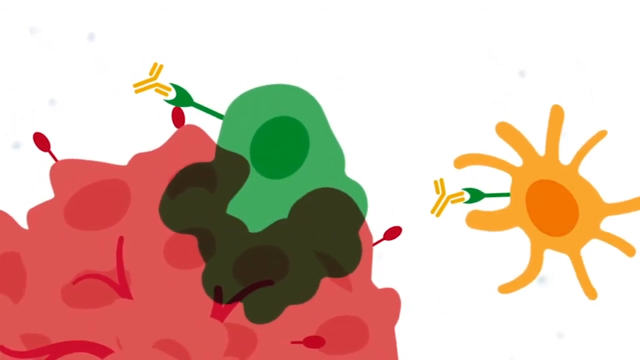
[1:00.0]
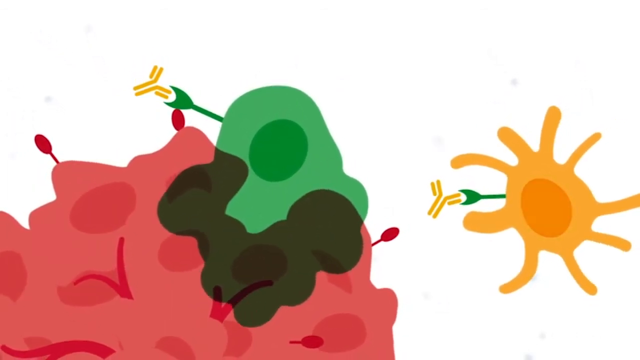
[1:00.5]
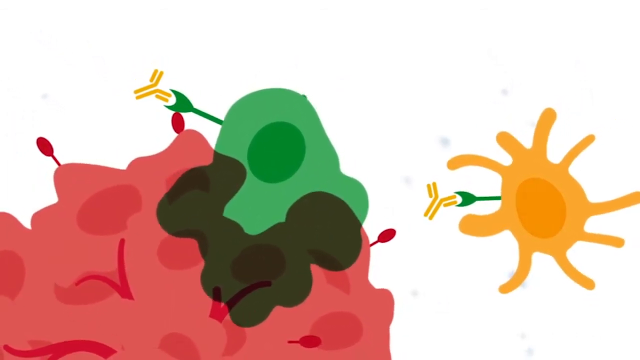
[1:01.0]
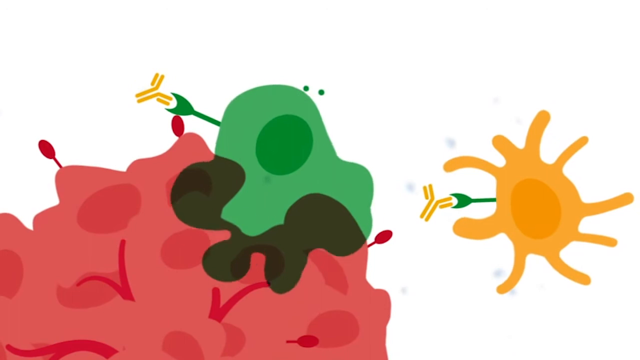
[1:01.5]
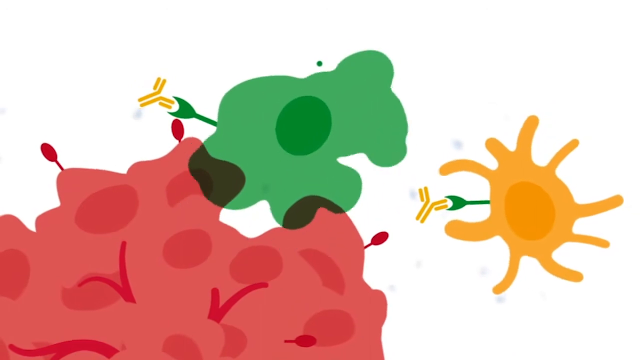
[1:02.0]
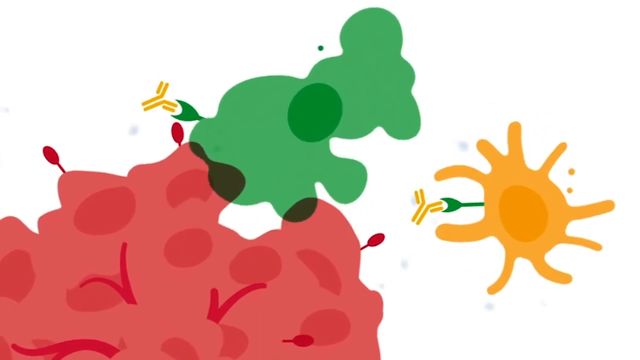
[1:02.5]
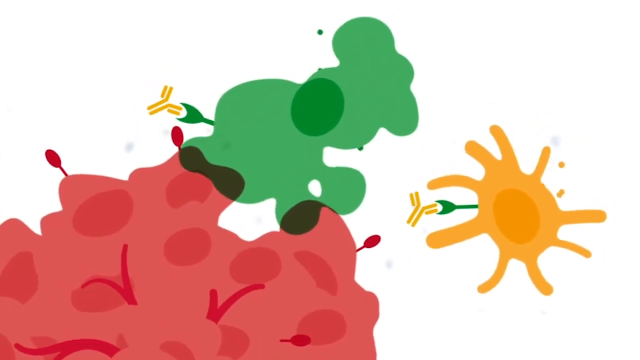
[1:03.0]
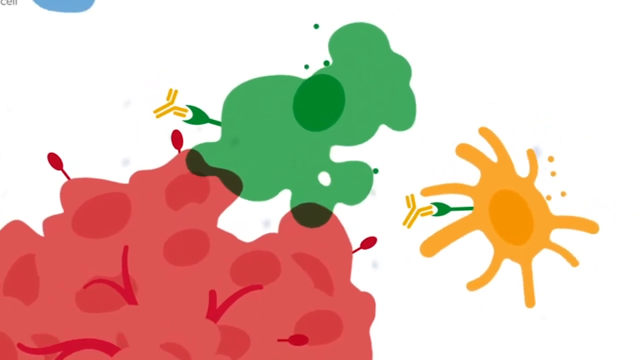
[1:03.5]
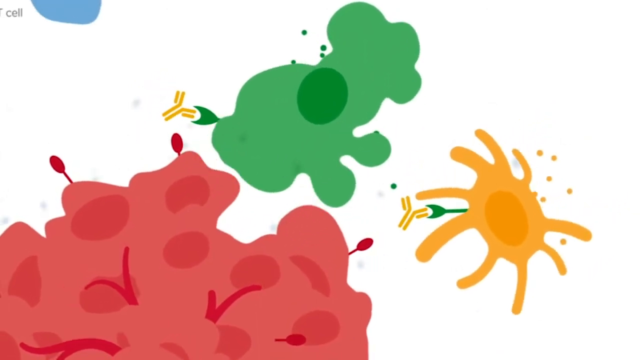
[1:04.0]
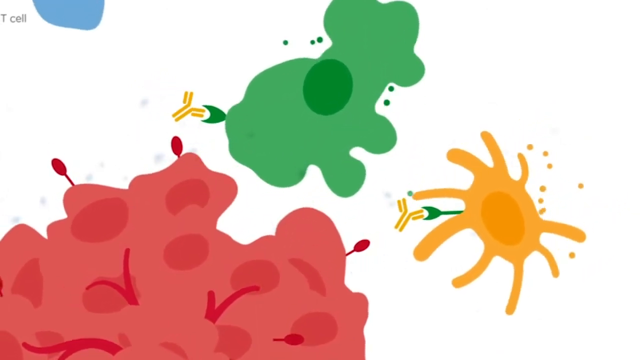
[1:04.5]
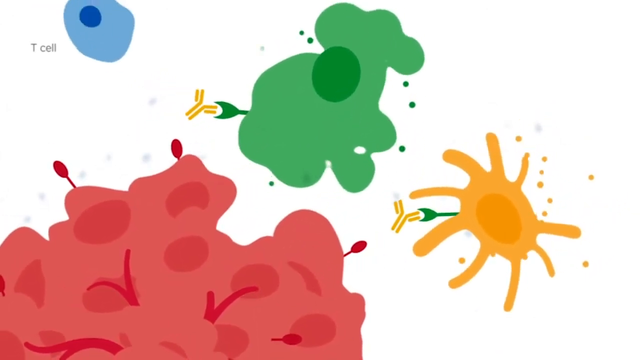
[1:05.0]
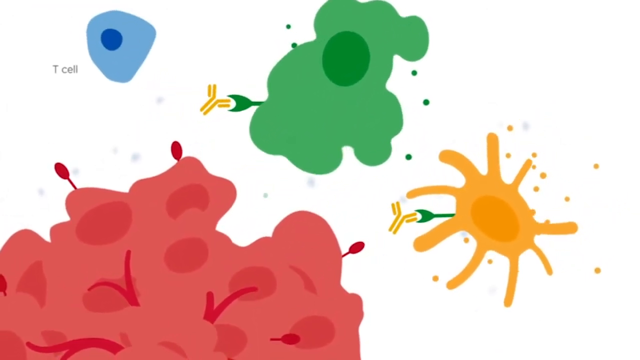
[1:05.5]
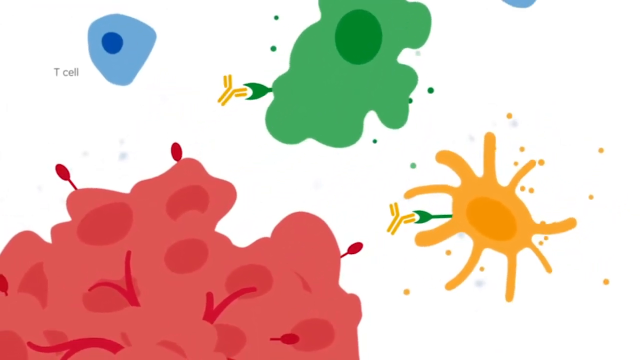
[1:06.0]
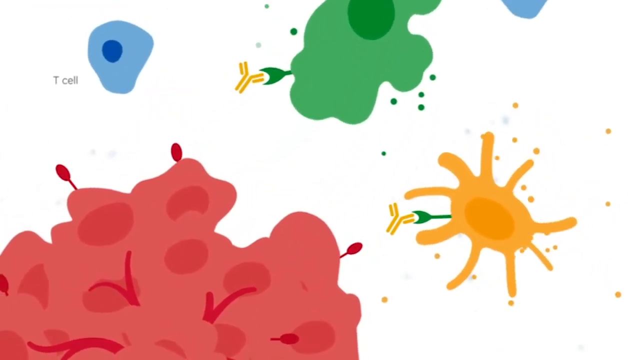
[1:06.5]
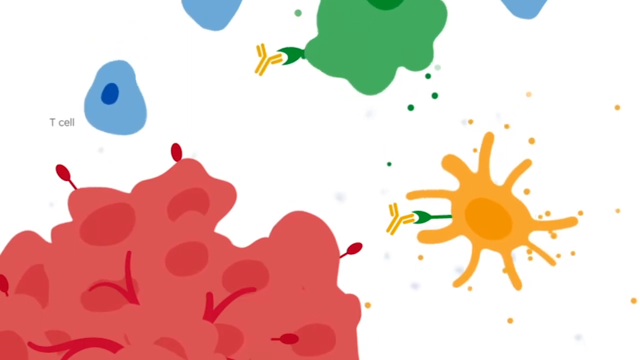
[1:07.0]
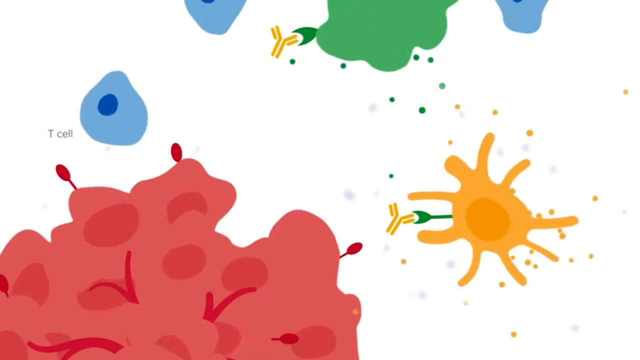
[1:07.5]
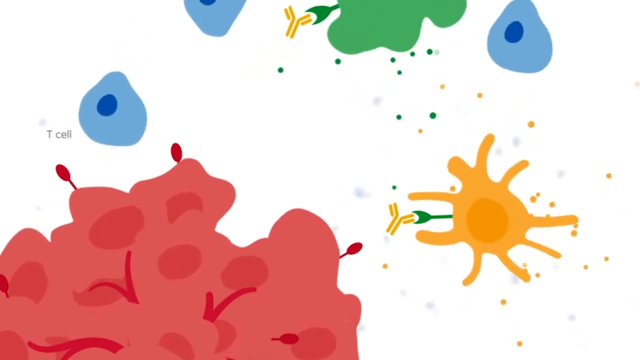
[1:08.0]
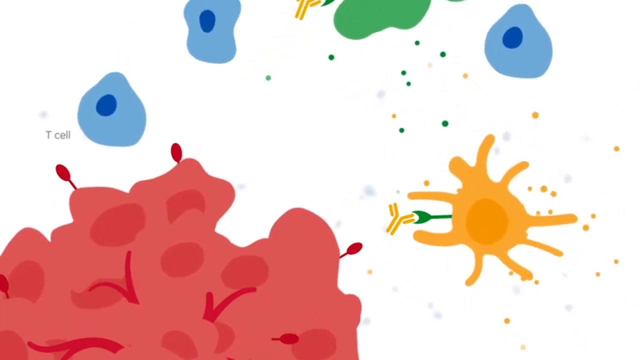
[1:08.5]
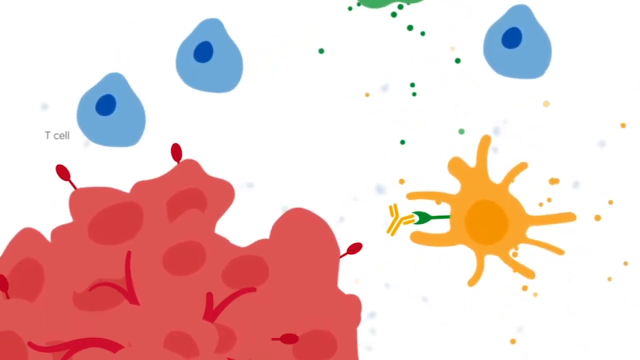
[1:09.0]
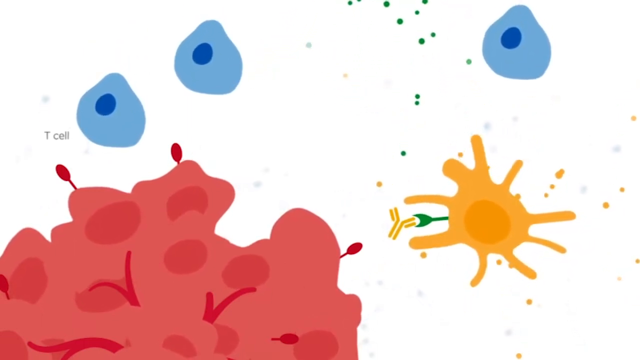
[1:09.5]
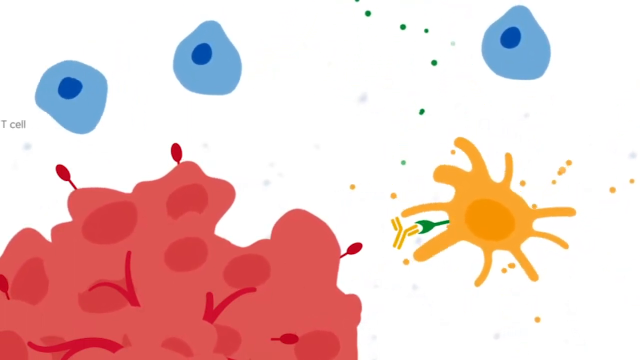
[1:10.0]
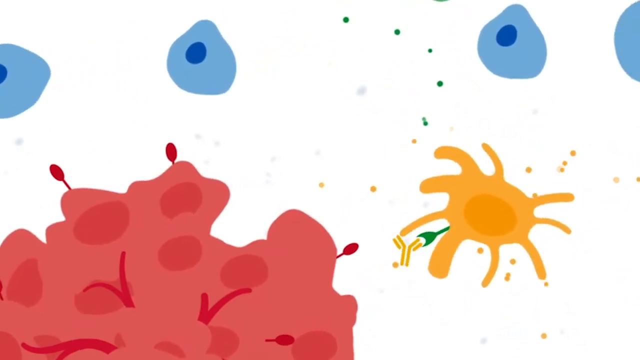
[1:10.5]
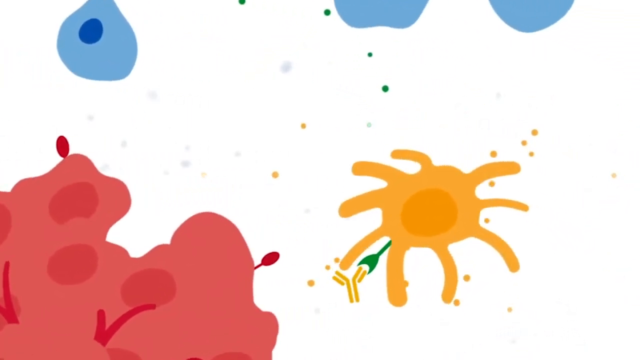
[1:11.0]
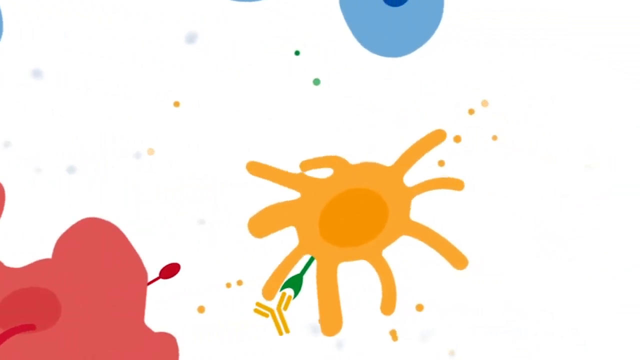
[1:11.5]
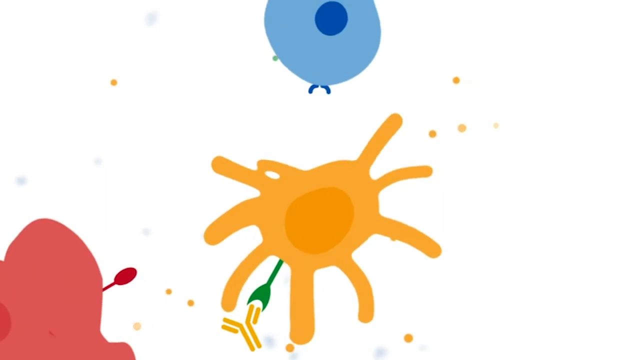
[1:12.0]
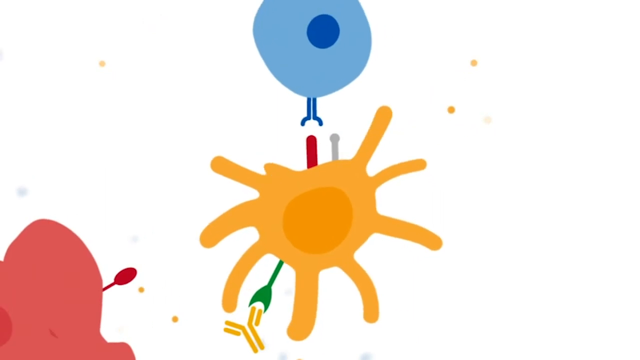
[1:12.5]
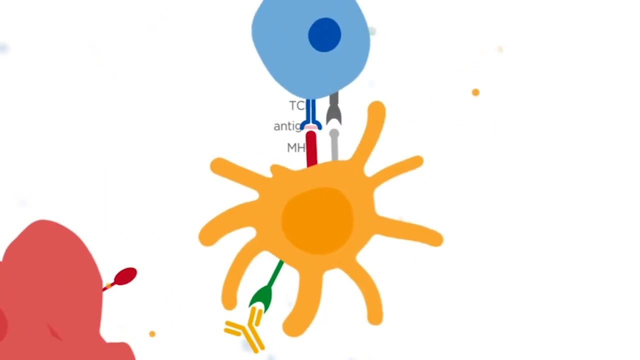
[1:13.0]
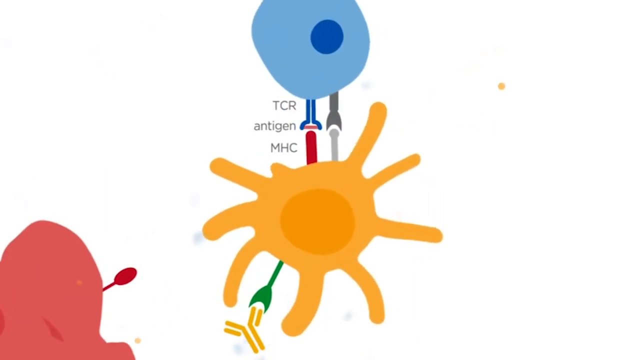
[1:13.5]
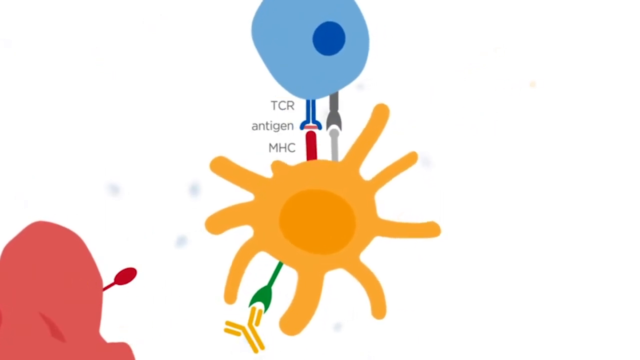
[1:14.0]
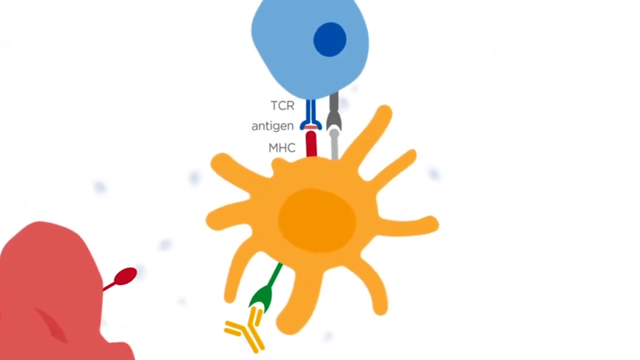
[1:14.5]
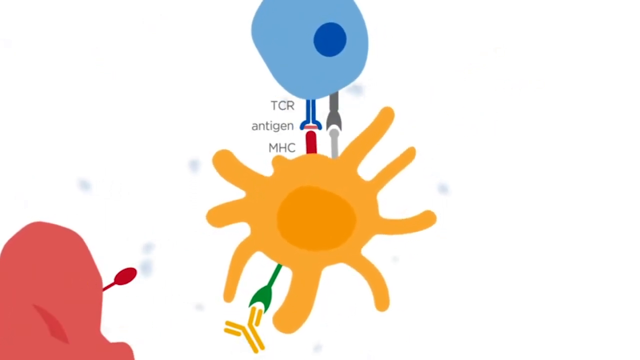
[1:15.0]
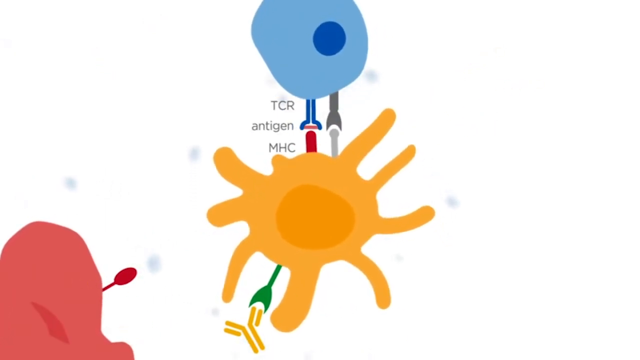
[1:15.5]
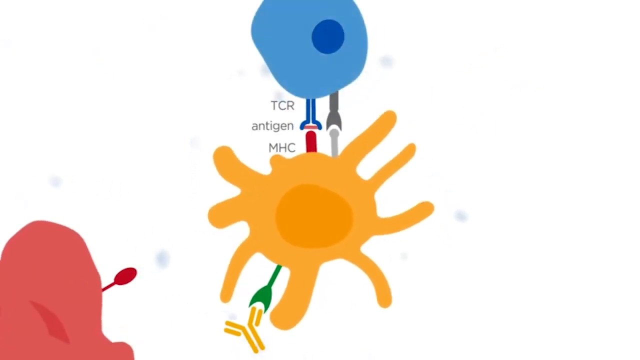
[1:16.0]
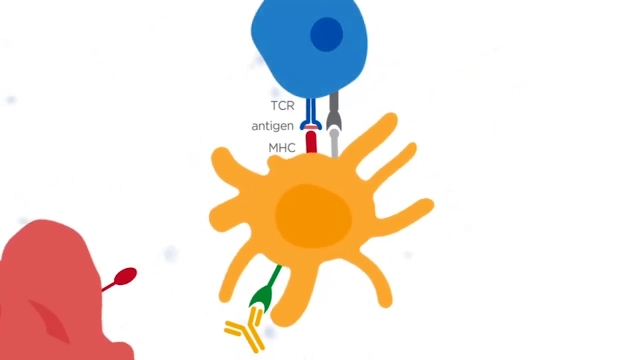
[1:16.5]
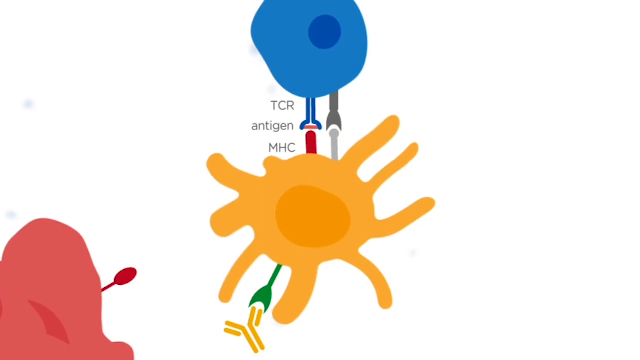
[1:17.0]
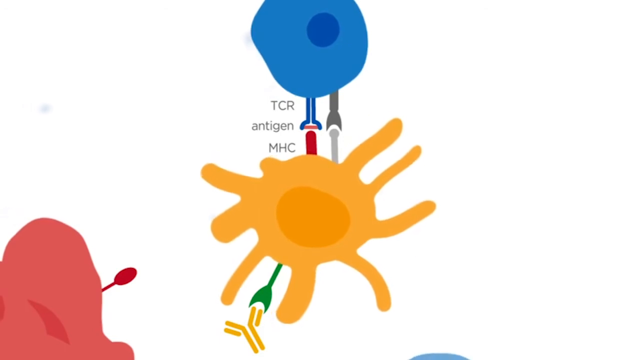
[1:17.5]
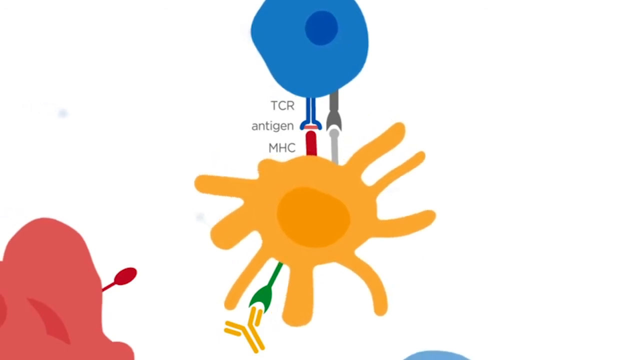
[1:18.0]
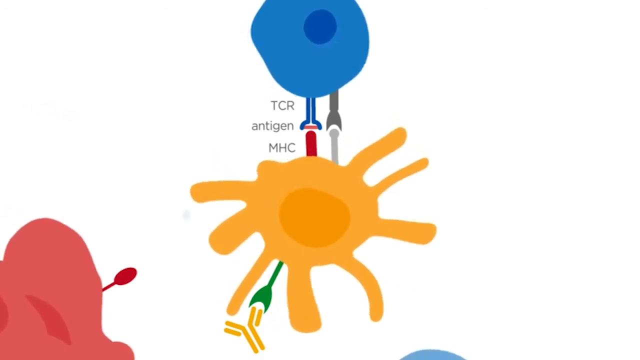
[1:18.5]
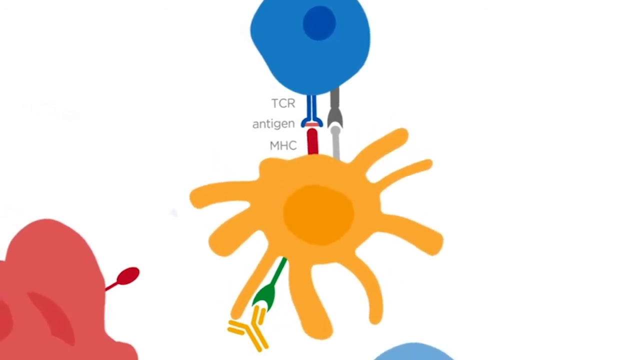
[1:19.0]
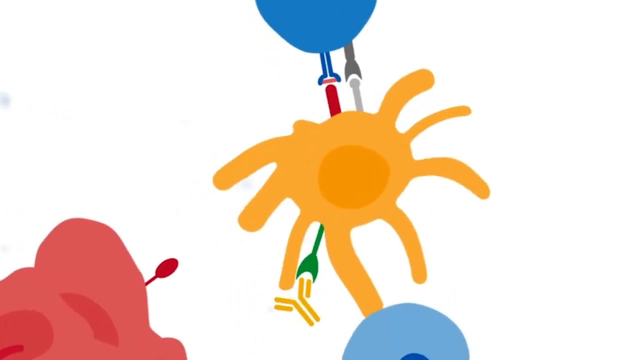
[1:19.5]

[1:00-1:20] After the T-cell attack, the tumor becomes smaller. TCR and MHC are shown as part of the body's defense against the tumor.